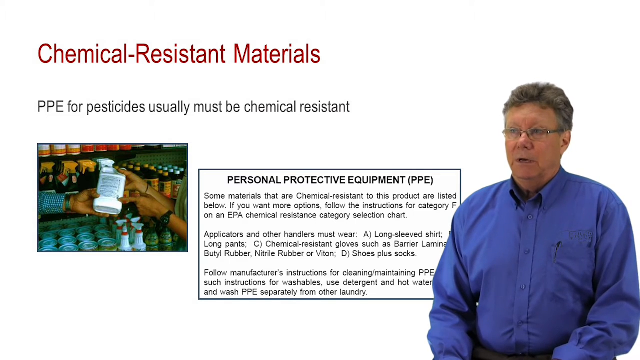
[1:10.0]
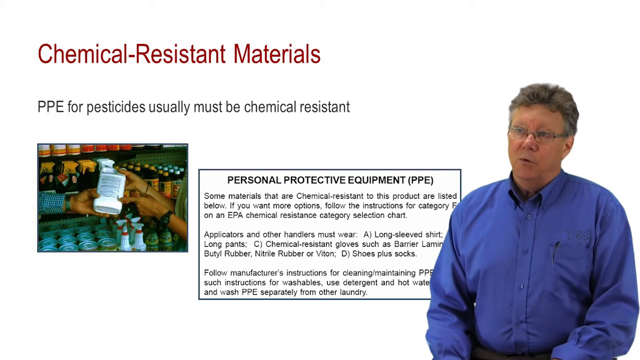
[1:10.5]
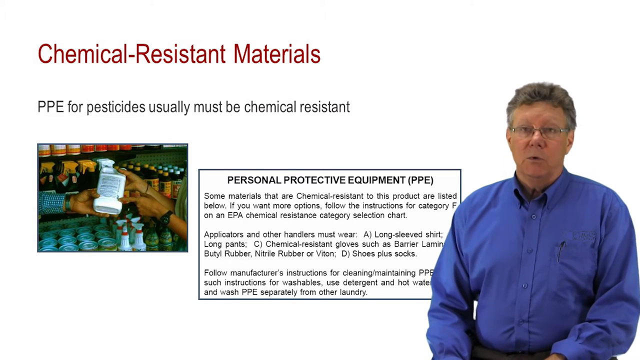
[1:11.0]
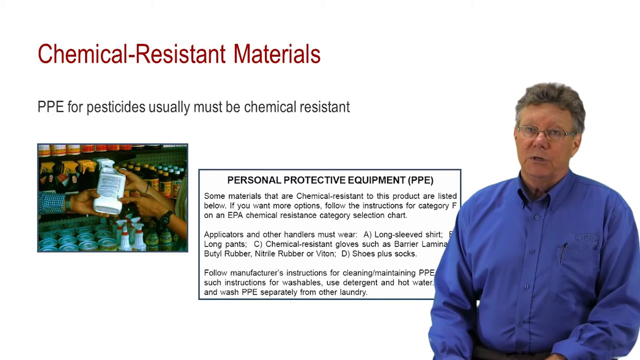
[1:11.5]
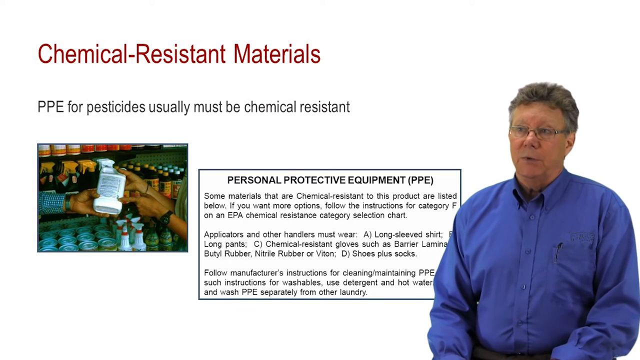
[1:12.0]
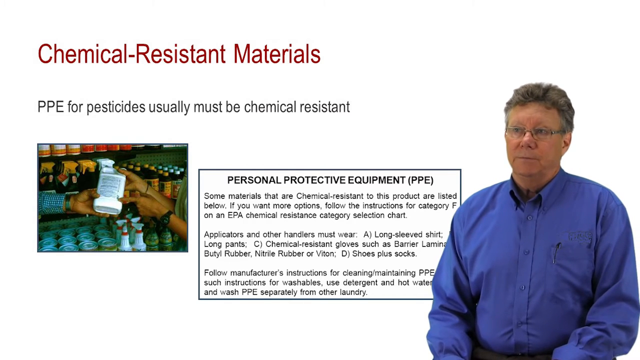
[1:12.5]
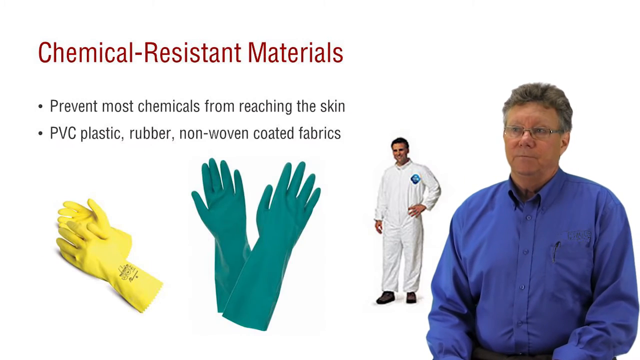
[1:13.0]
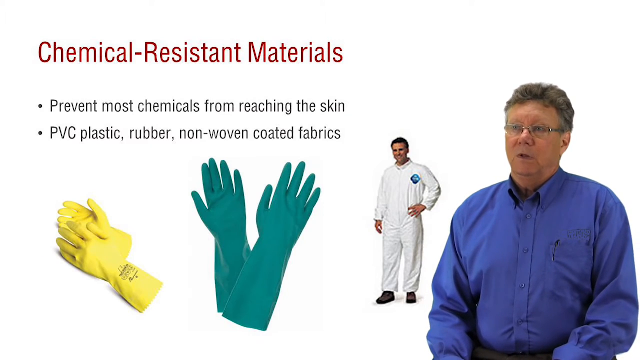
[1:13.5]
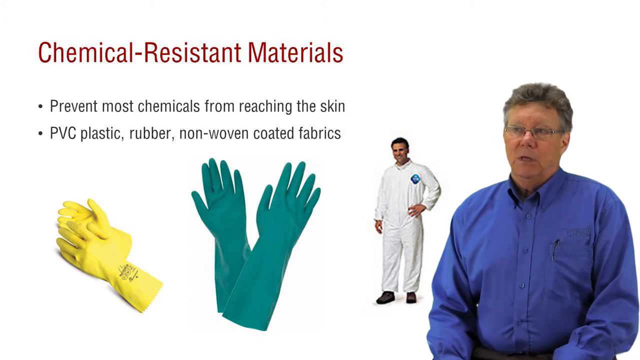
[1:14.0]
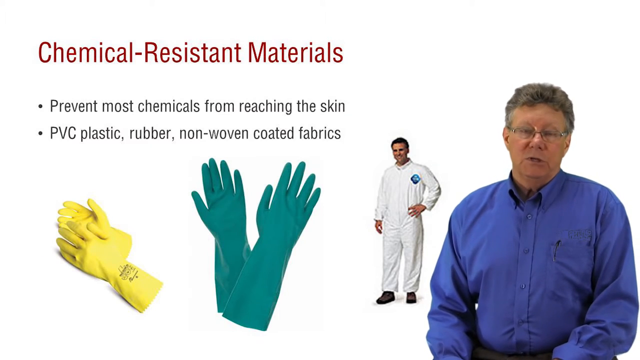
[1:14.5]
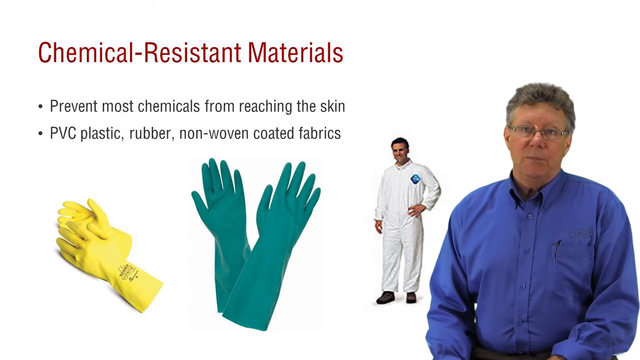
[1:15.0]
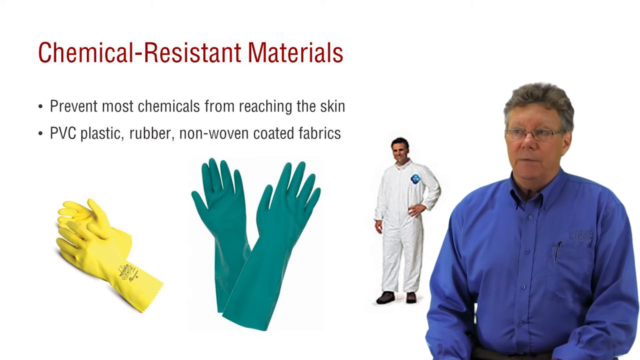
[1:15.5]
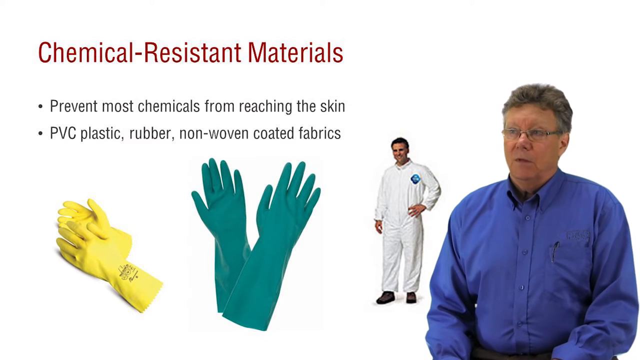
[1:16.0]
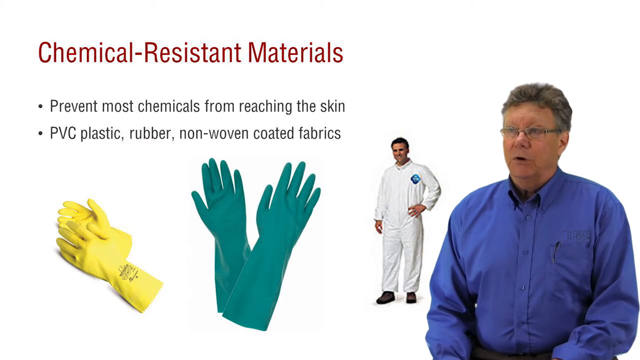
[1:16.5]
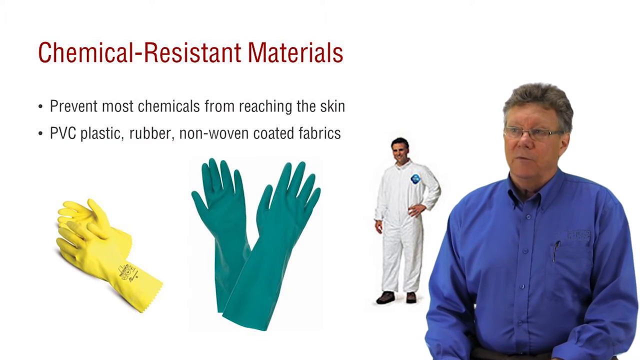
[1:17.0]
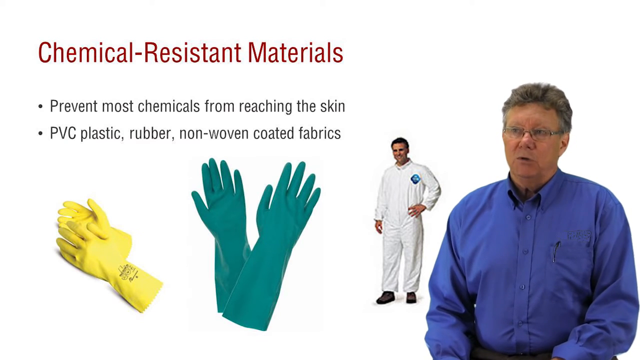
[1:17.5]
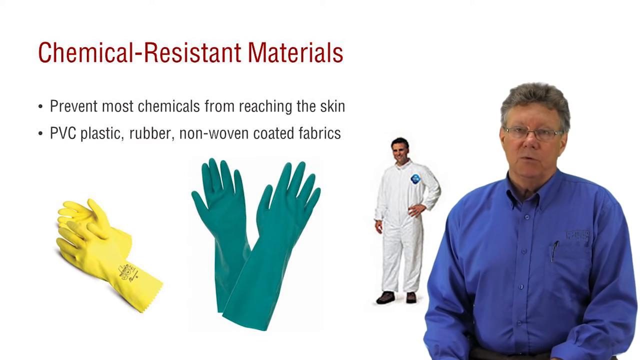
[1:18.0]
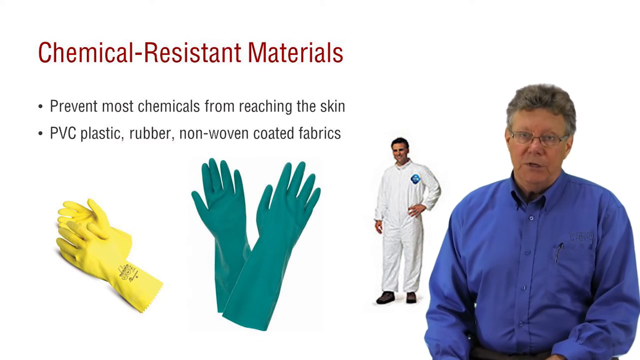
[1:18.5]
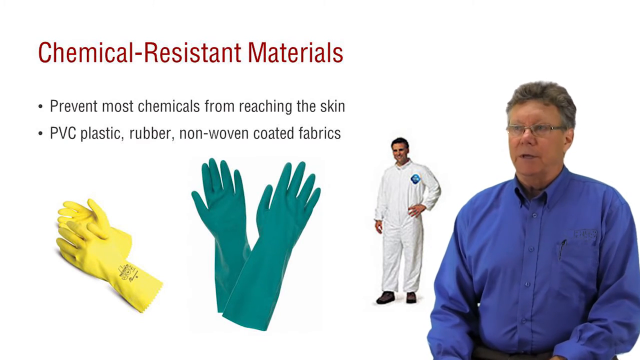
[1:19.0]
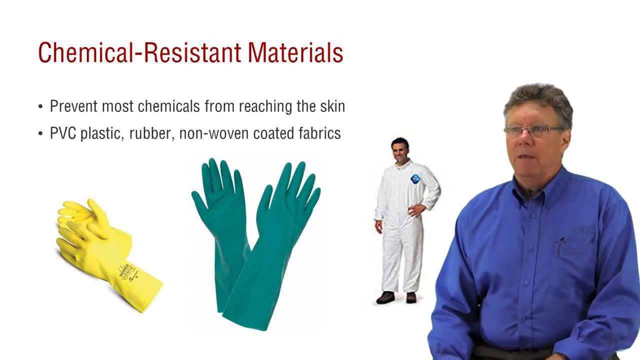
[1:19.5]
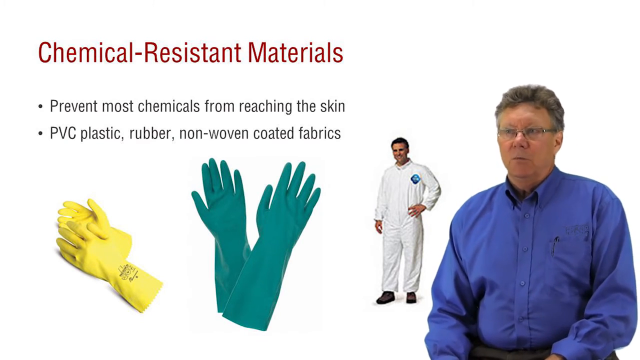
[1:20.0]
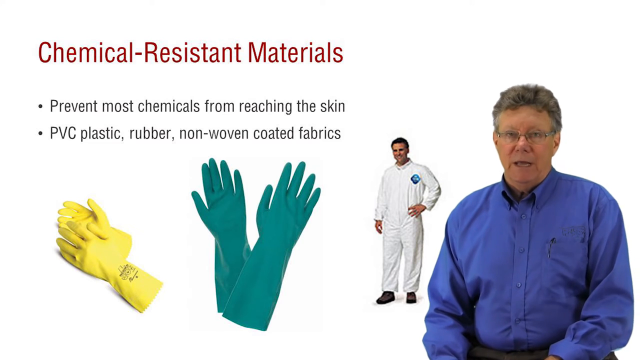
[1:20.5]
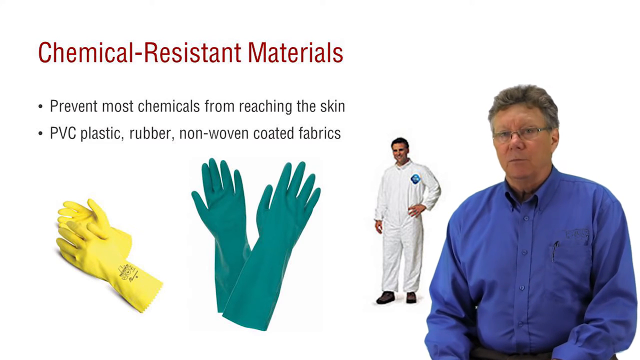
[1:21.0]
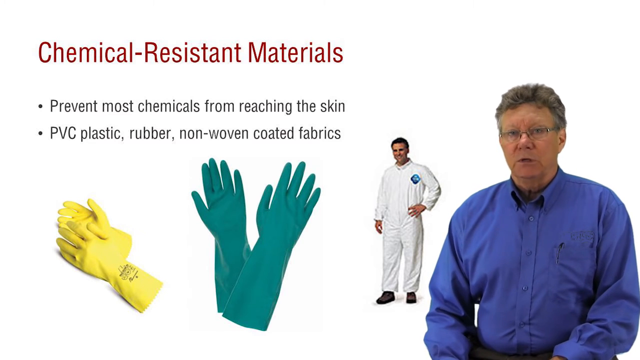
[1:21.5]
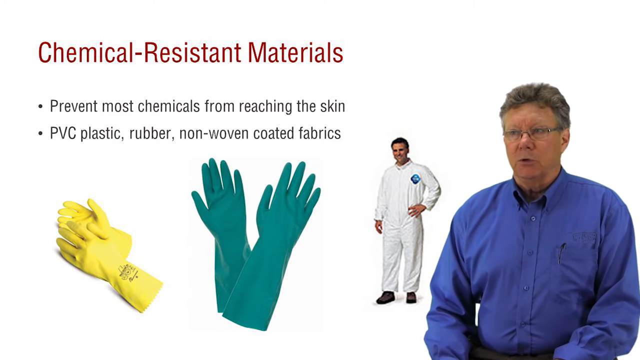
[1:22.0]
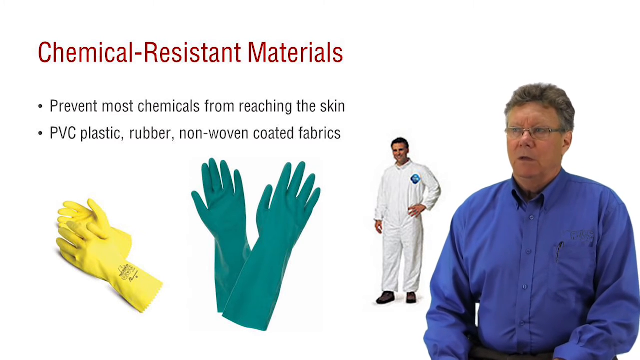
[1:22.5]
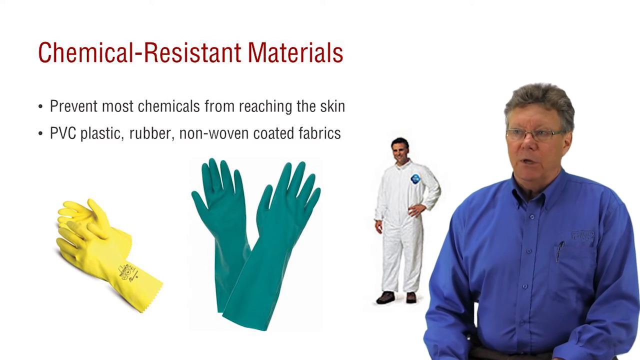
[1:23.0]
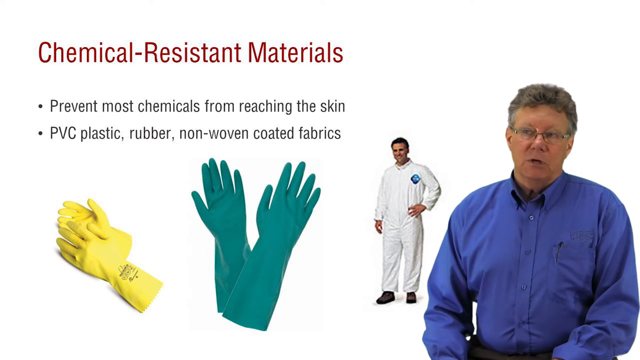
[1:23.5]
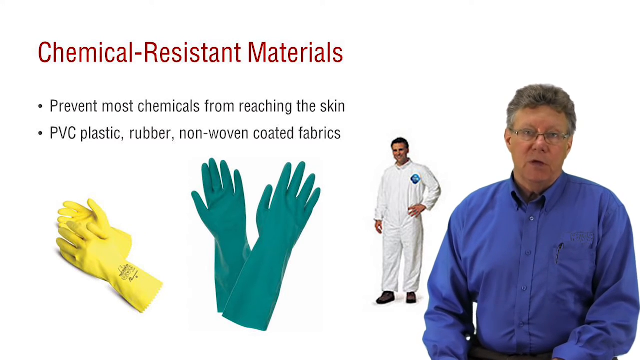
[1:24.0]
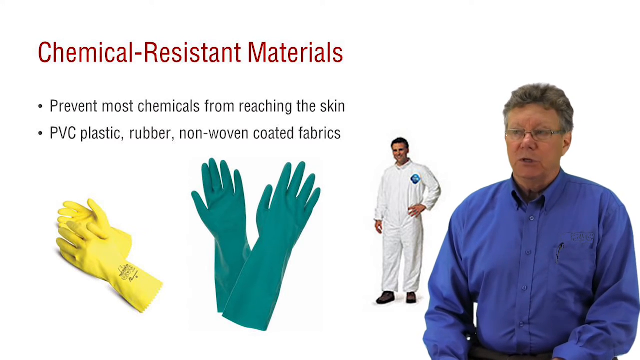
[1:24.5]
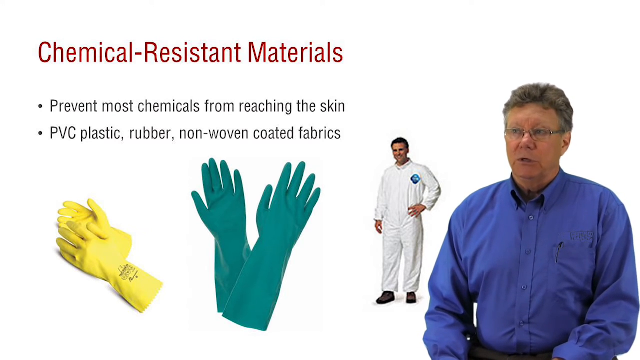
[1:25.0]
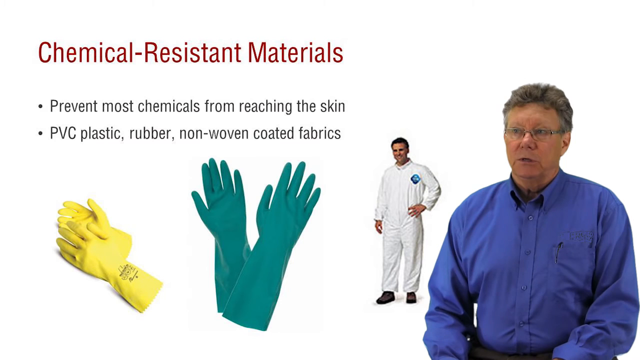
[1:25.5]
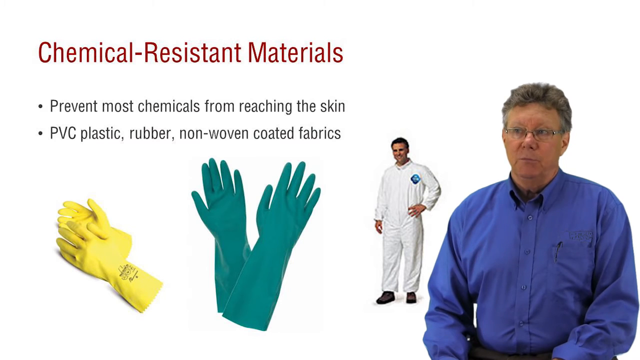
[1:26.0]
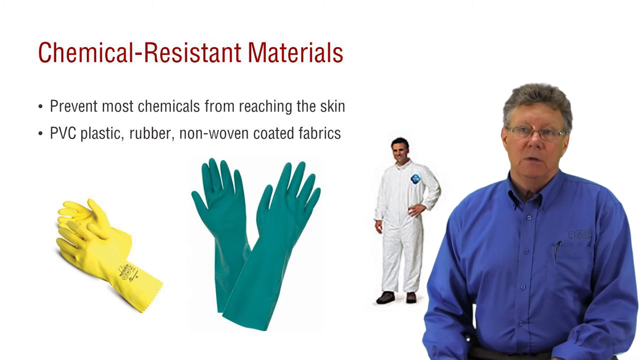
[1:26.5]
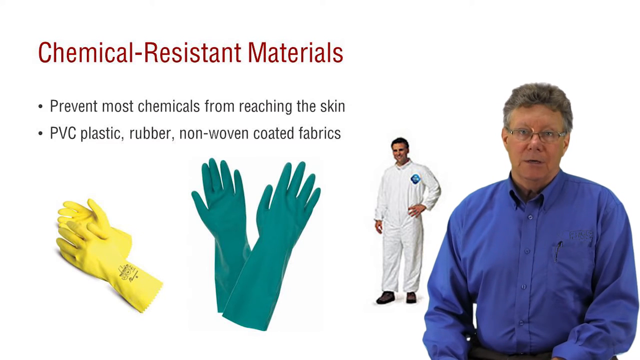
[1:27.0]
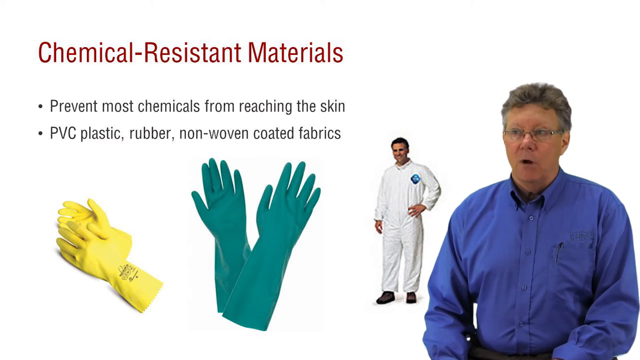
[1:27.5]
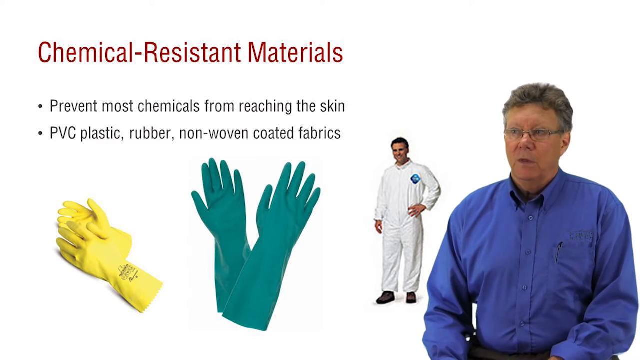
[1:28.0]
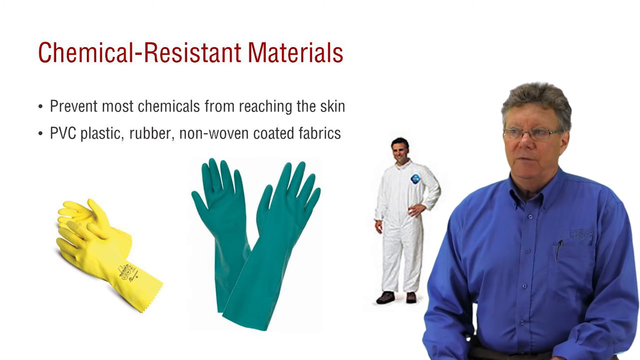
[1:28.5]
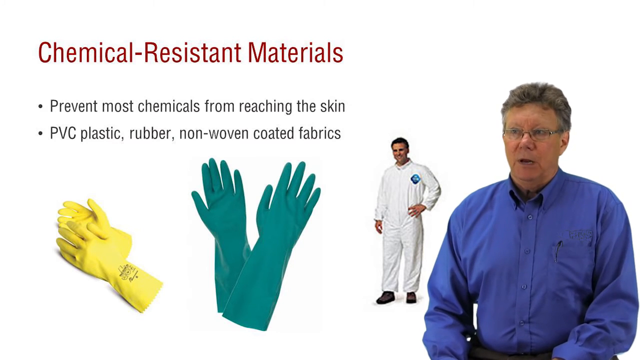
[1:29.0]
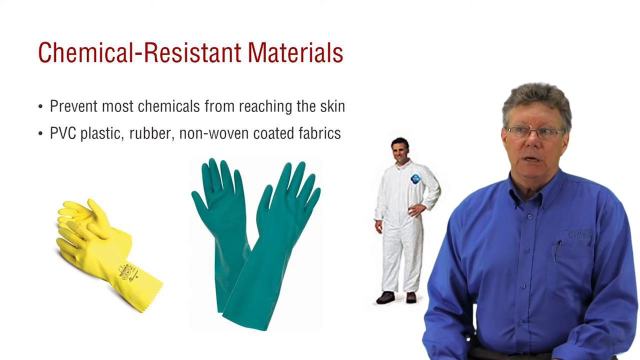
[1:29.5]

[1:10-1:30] In a store, two people hold a white bottle of pesticide and look at the writing: on one side is a lady, of whom only her two hands and green shirt are visible, and on the left is a man in a blue shirt holding one side of the bottle. On screen, red text reads "chemical resistant materials," and underneath: "PPE for pesticides usually must be chemical resistant" and "some materials that are chemical resistant to this product are listed below. If you want more options, follow the instructions for category F on an EPA chemical resistance category selection chart. Applicators and other handlers must wear A, long-sleeved shirt, B, long pants, C, chemical resistant gloves such as barrier laminate, butyl rubber, nitrile rubber, or viton, D, shoes plus socks, follow manufacturer's instructions for cleaning, maintaining PPE such as instructions for washables, use detergent and hot water, and wash PPE separately from other laundry." Then the man in the shirt is shown talking, and to the left are two kinds of gloves, shorter yellow ones and long green ones, and a man wearing a long-sleeve white suit and sneakers.